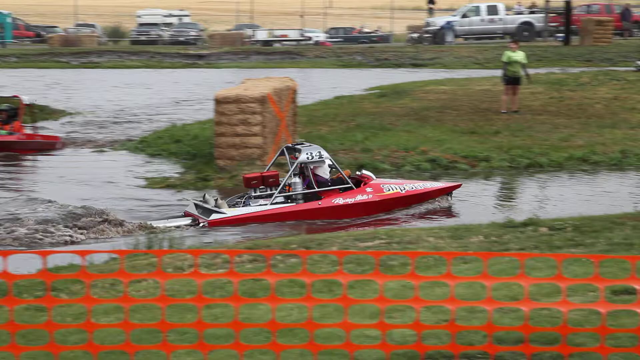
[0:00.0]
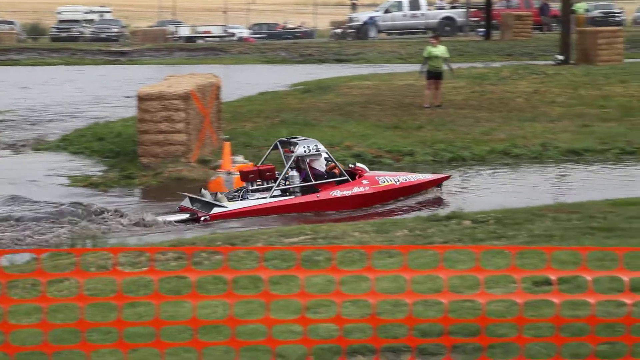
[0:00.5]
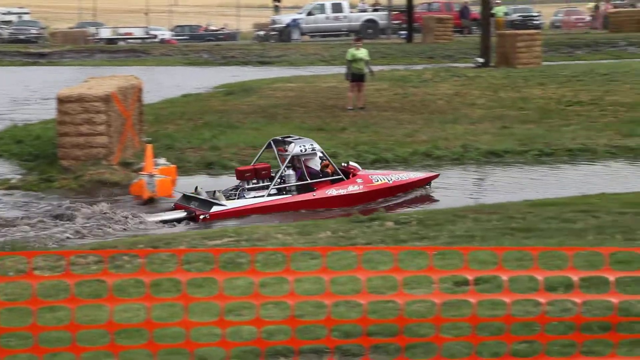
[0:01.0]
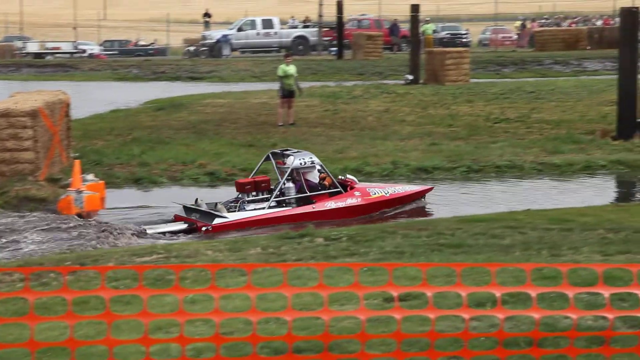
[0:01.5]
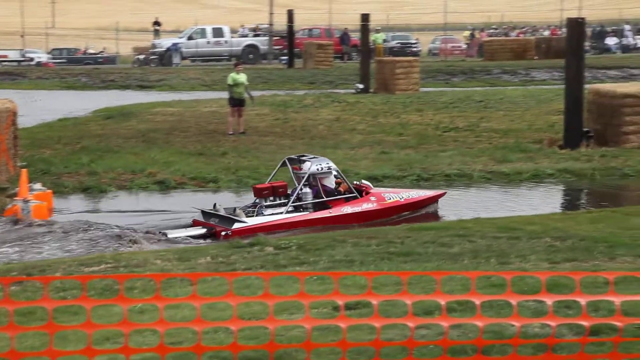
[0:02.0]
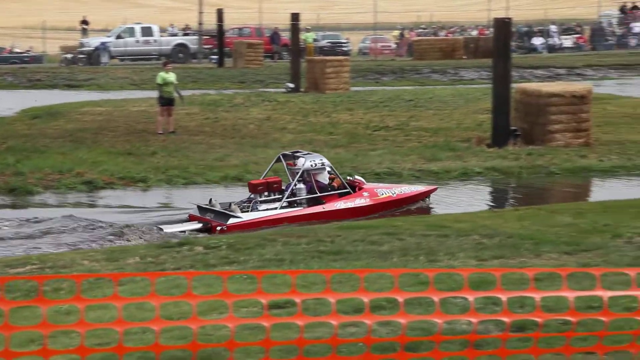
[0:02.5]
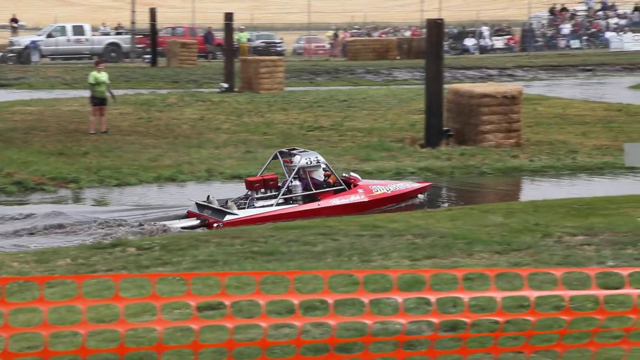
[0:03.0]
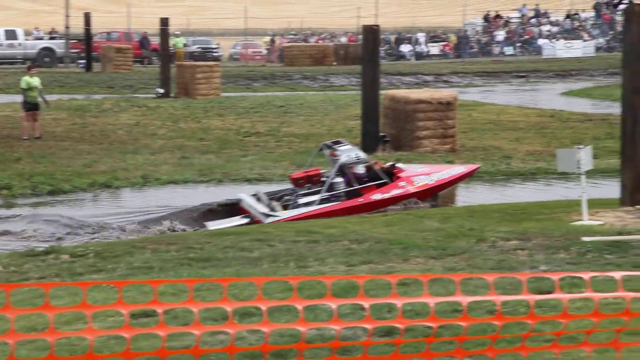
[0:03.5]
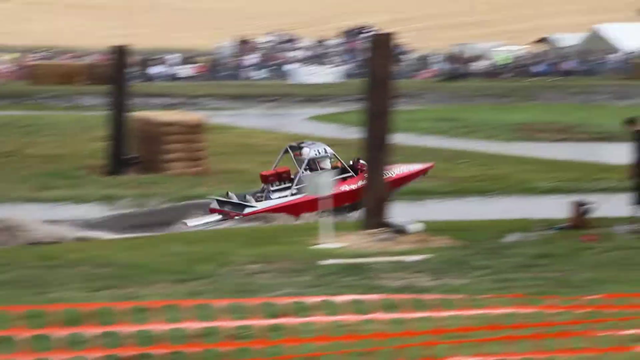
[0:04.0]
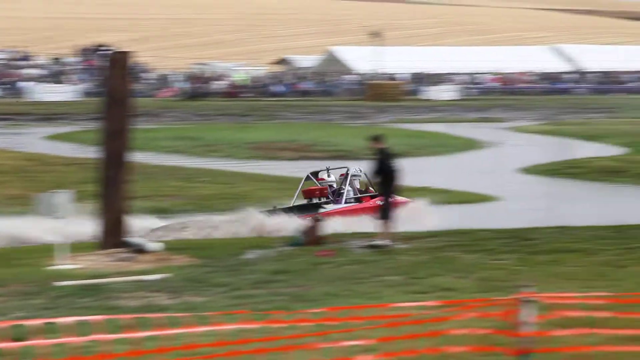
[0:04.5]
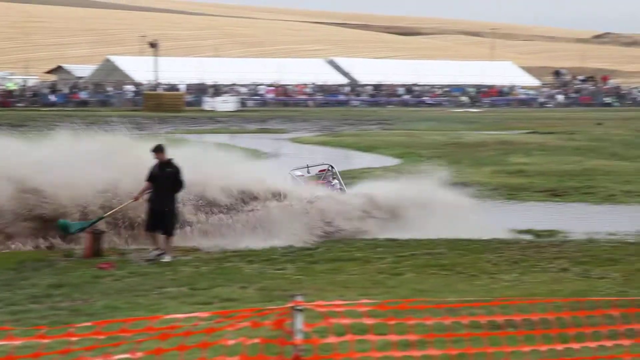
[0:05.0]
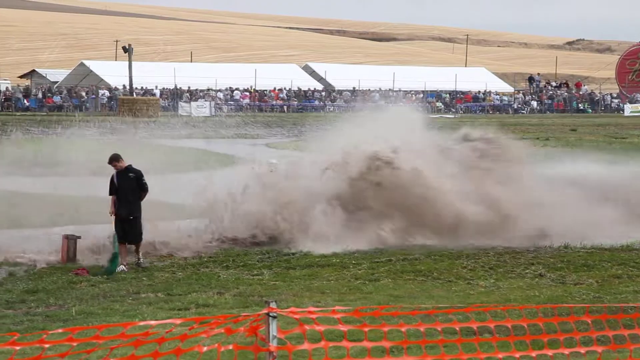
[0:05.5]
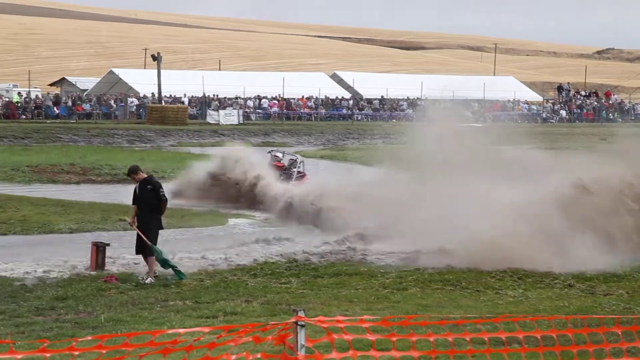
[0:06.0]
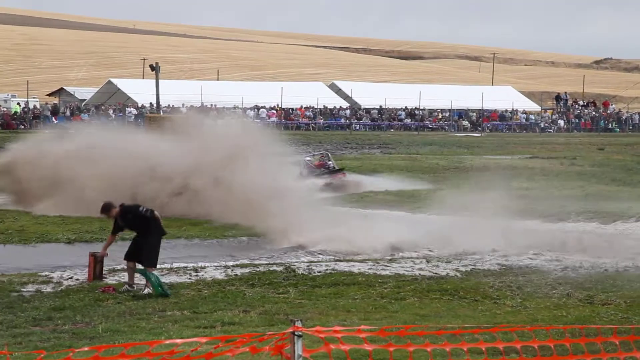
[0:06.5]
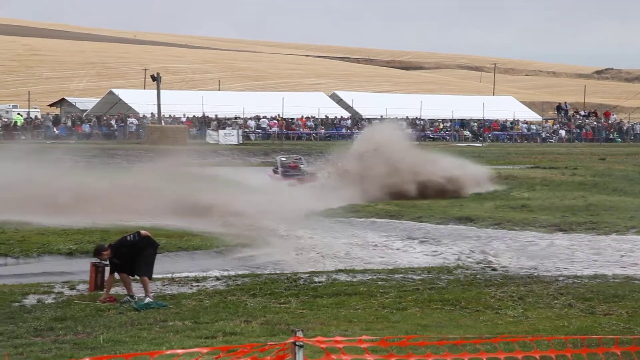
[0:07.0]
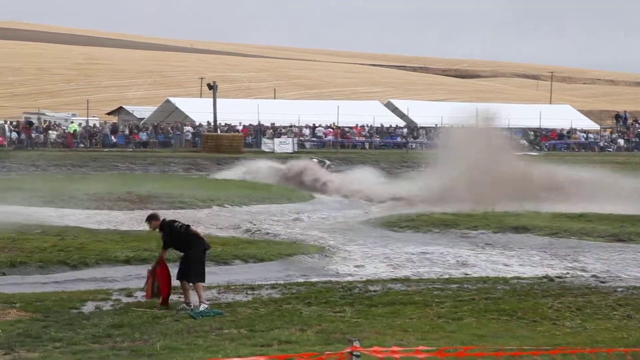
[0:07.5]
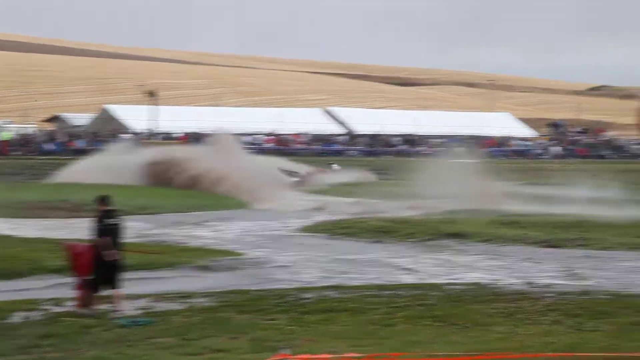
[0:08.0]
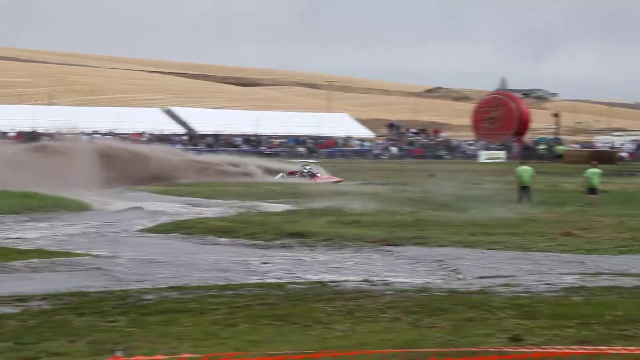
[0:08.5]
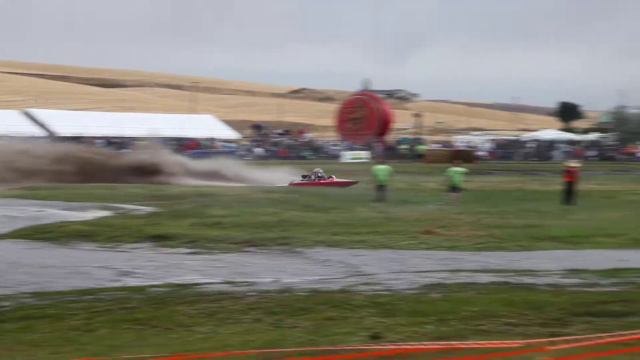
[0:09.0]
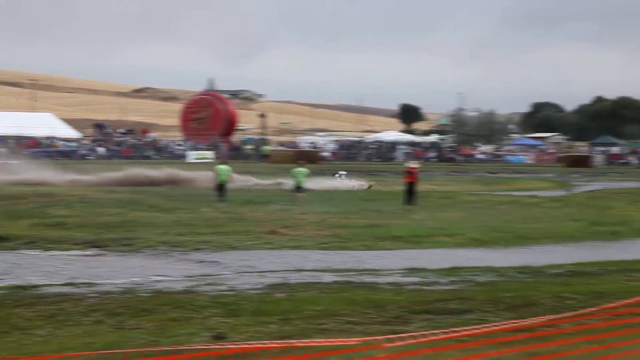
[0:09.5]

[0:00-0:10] A red speed boat, or perhaps a power boat, with the number "34" on it goes down a narrow channel of water, piloted by a man wearing a white helmet. The boat first travels down a narrow stretch of water past what looks like a concrete block with an X on it. A man is on an island beside the water. Suddenly the boat speeds up and takes off at high speed round the corner, spraying water out the back as it zigzags round the course. A crowd of spectators is watching, along with another marshal wearing black clothes who has a flag in his hand.